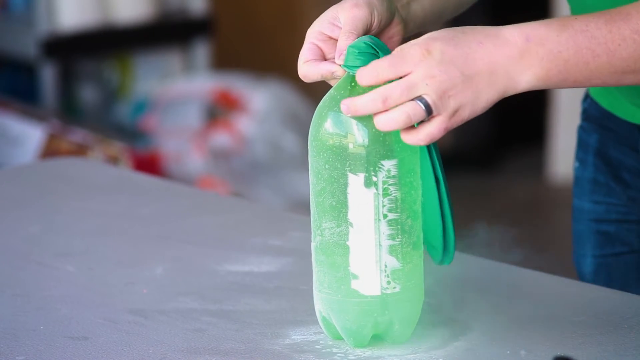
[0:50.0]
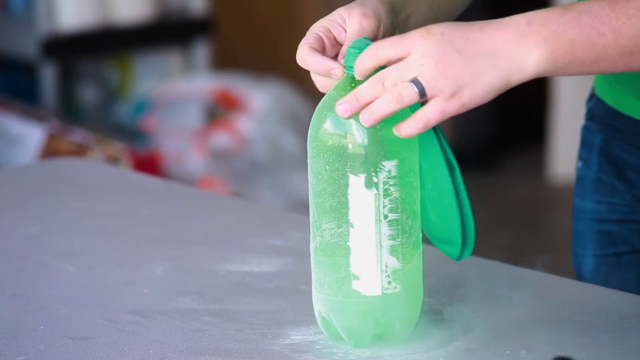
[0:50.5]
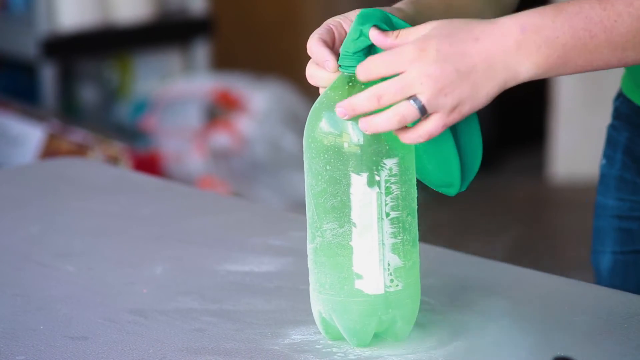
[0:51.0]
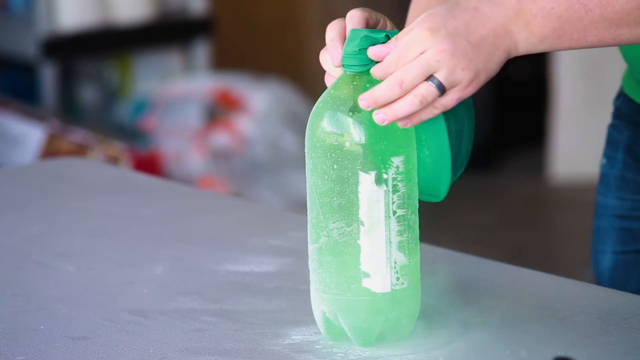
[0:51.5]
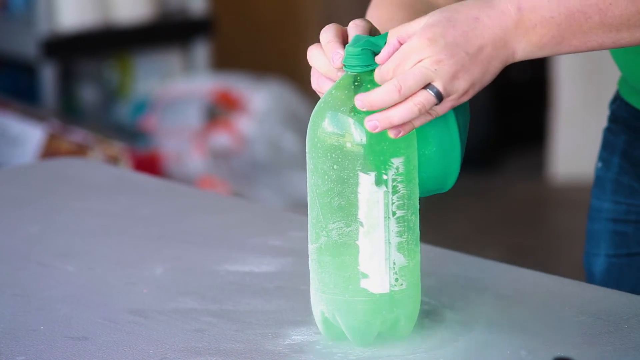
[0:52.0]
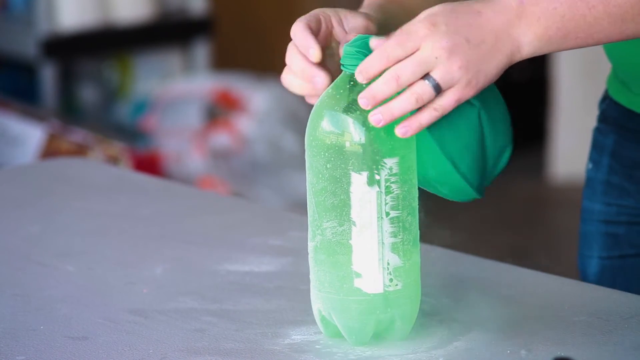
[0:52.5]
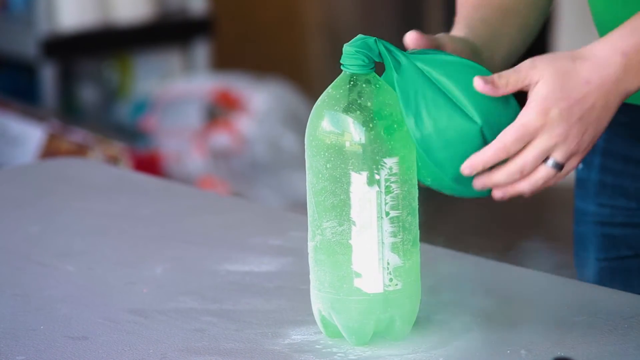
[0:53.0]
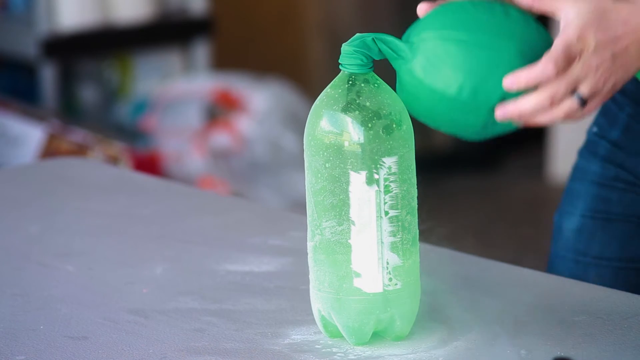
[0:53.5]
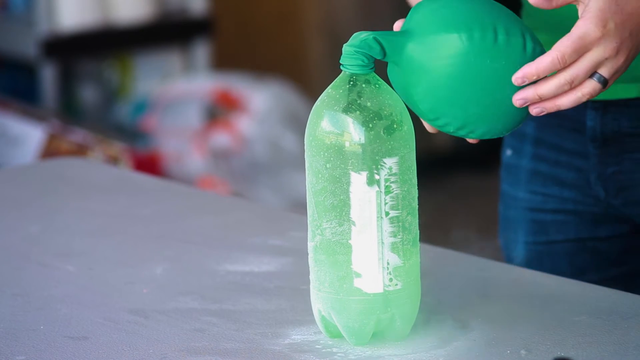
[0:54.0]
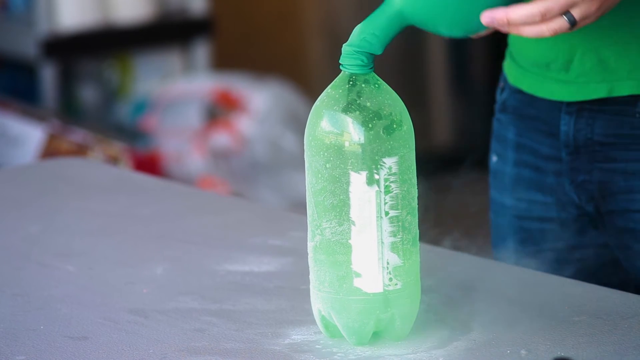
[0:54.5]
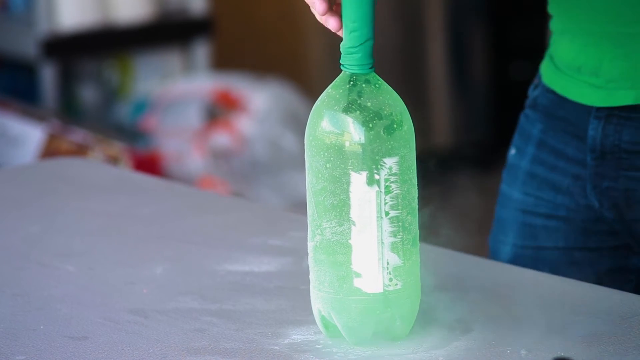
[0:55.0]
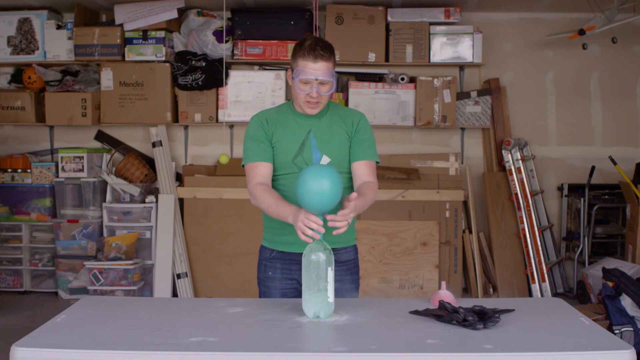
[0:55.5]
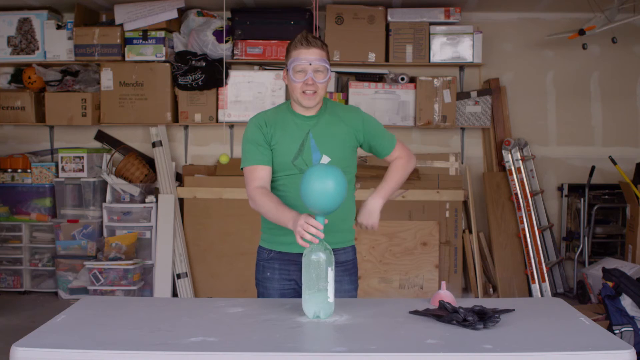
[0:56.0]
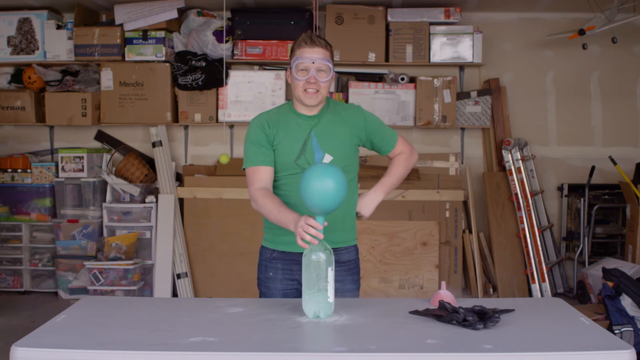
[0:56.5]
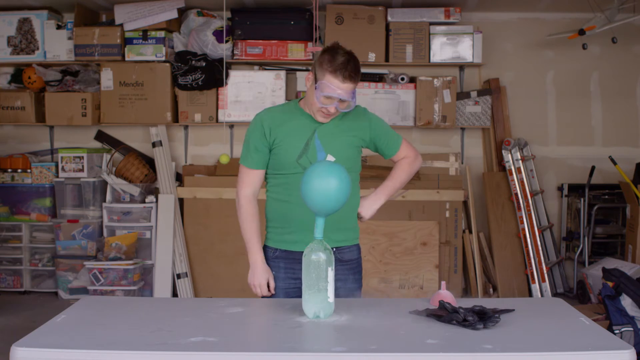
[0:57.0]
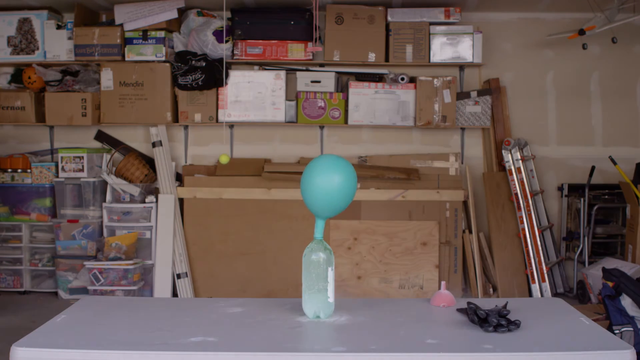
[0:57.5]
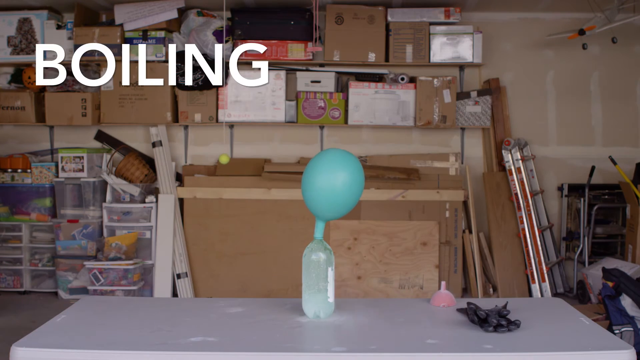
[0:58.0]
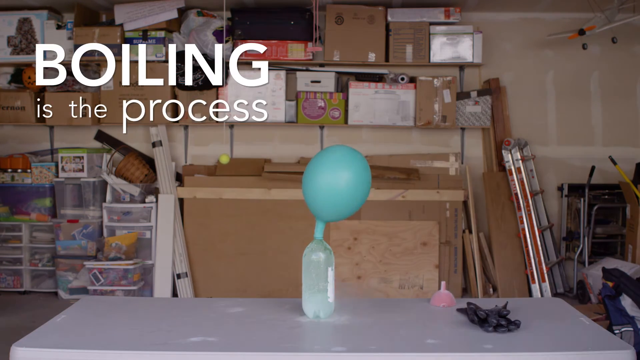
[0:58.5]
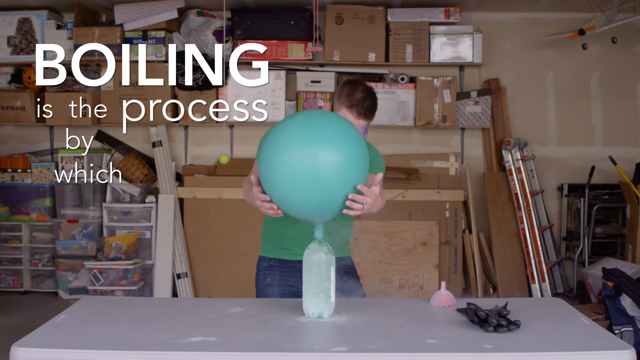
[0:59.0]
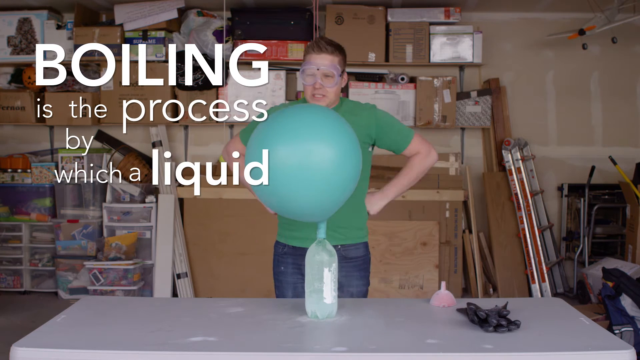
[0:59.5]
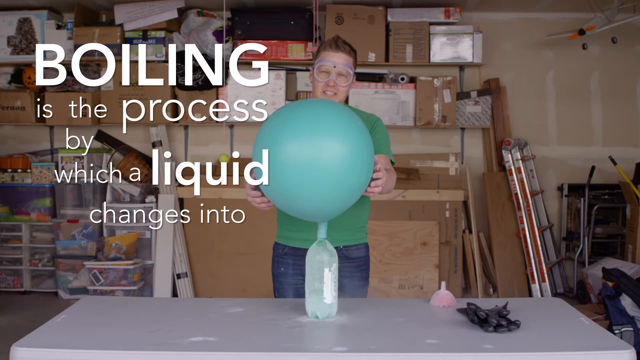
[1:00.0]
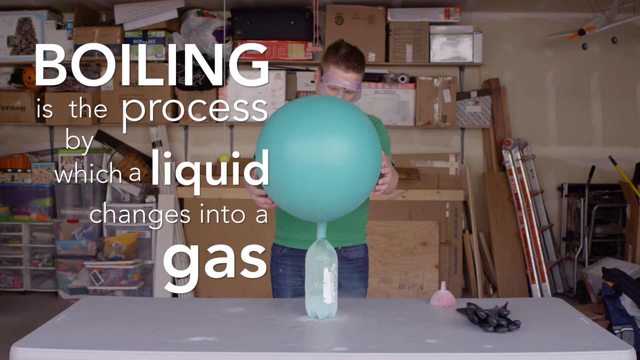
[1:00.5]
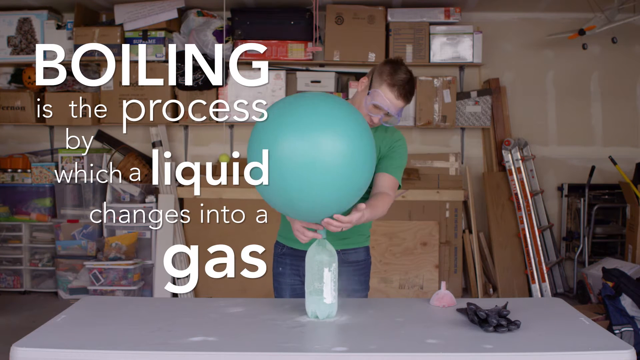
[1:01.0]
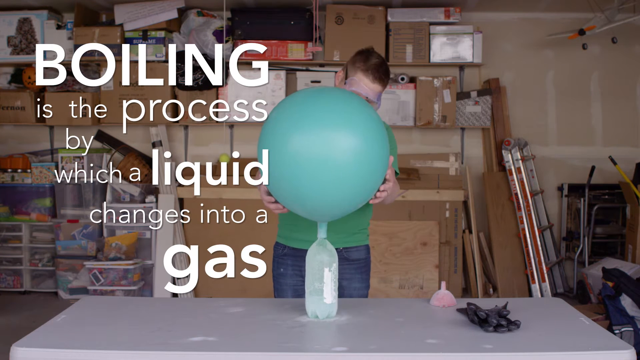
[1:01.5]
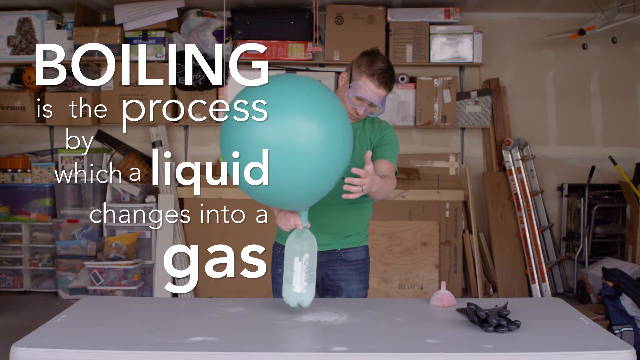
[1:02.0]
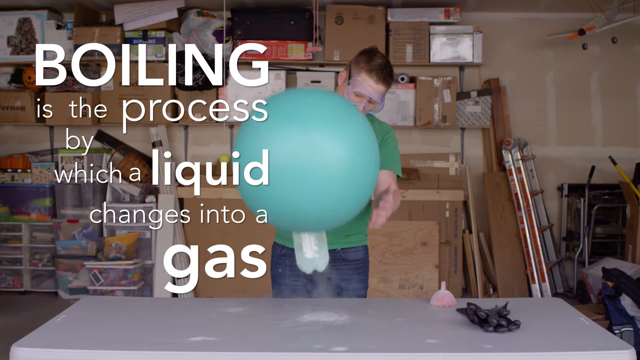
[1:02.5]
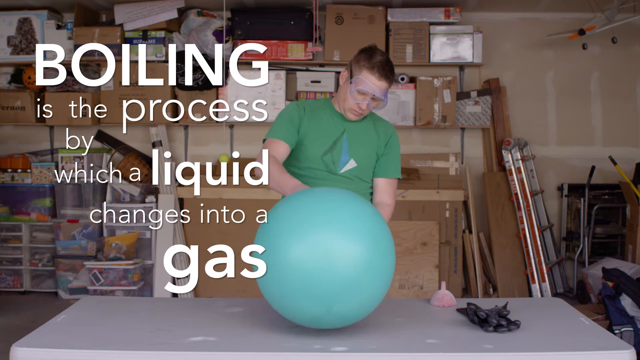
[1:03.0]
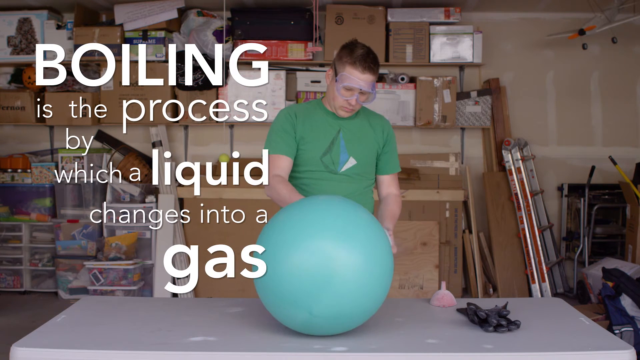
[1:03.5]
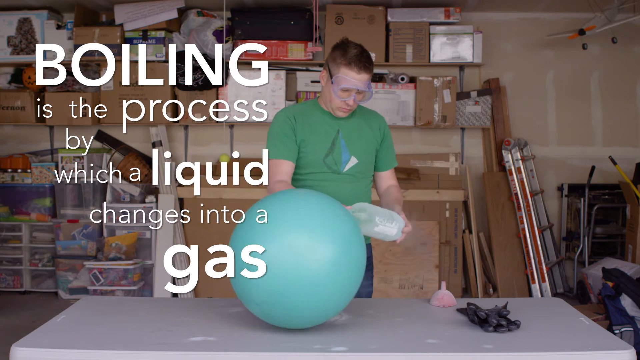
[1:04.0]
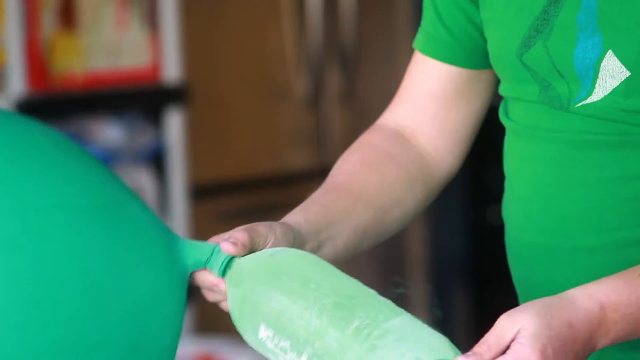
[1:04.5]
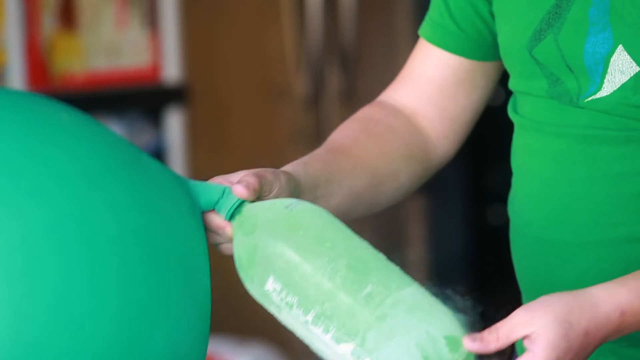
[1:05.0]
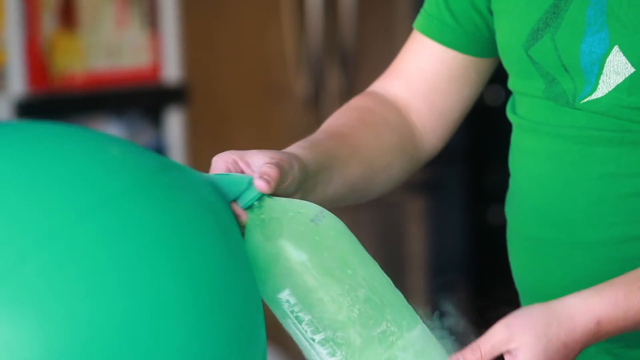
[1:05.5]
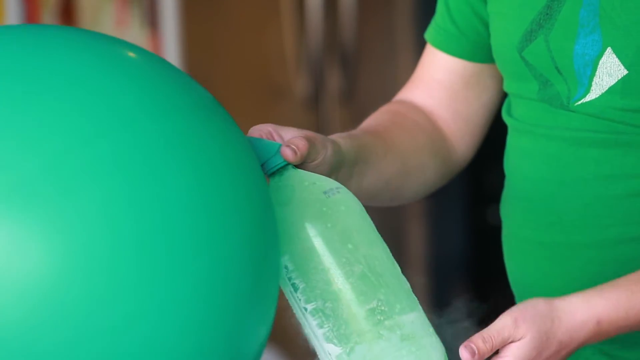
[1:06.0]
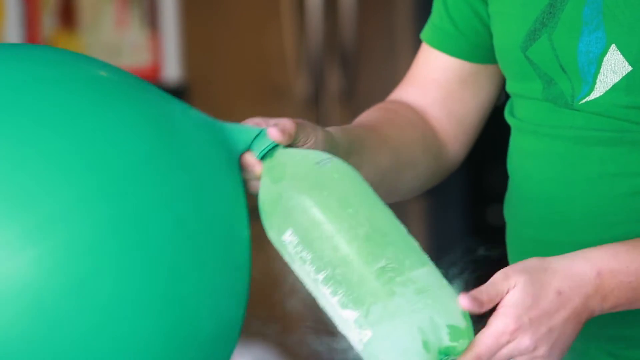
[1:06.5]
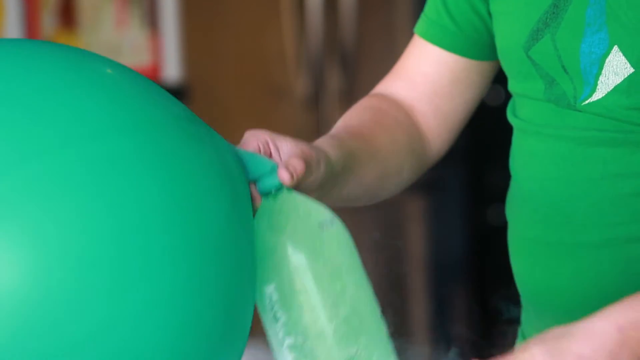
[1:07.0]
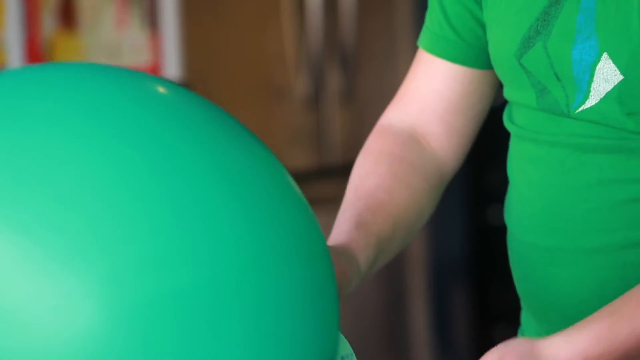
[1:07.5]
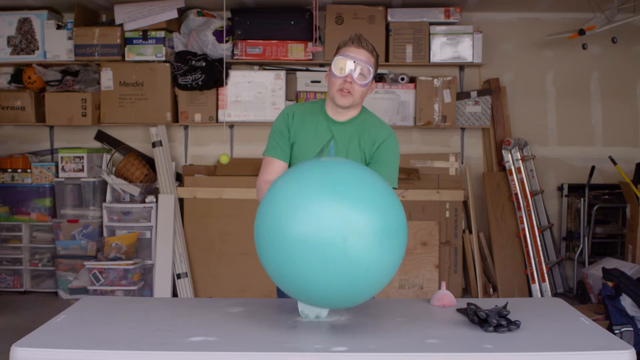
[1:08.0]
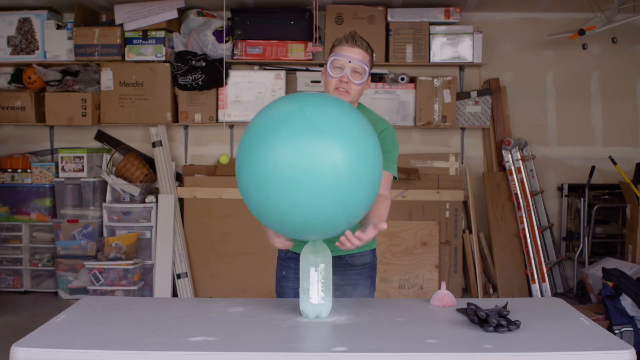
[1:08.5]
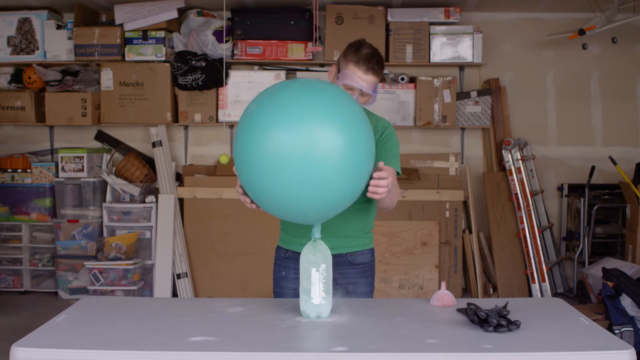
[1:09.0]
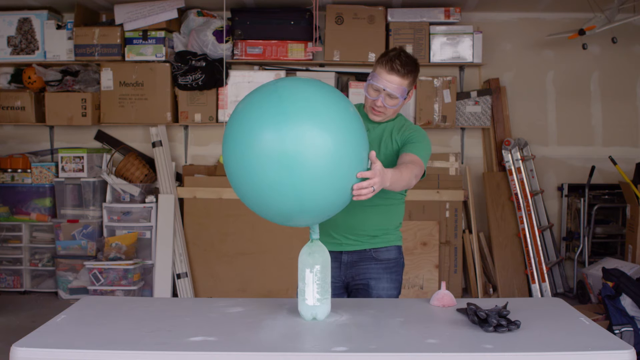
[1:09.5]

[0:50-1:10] A green balloon covers the empty green bottle. The setting is a garage with many containers and boxes in the background, and a small ladder to the right hanging on the wall in the background.